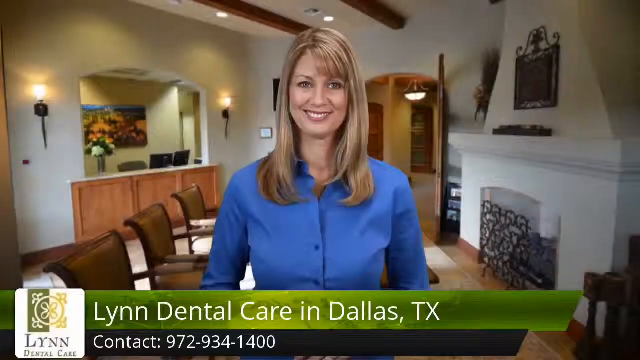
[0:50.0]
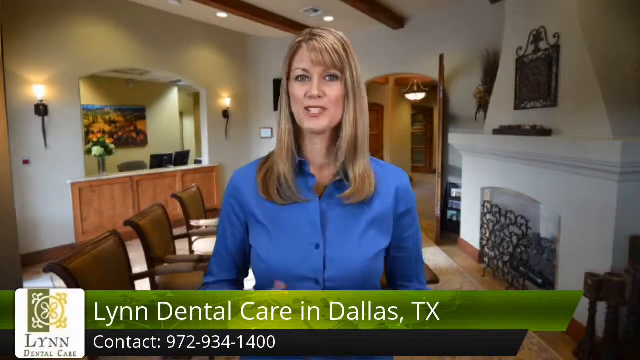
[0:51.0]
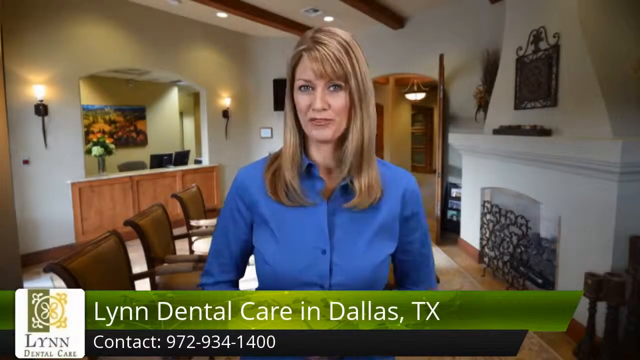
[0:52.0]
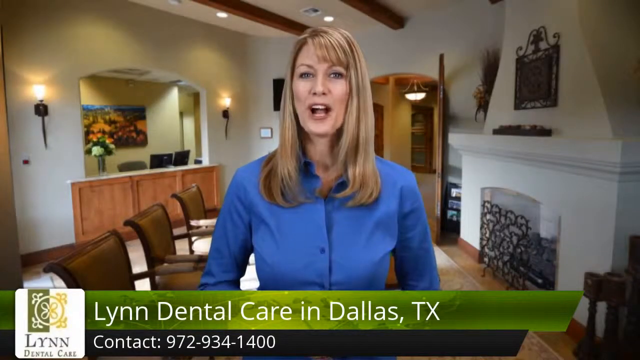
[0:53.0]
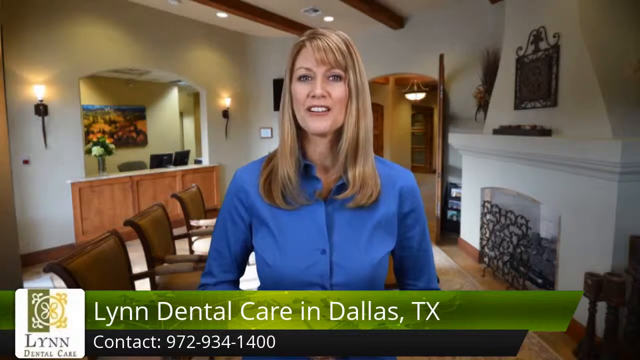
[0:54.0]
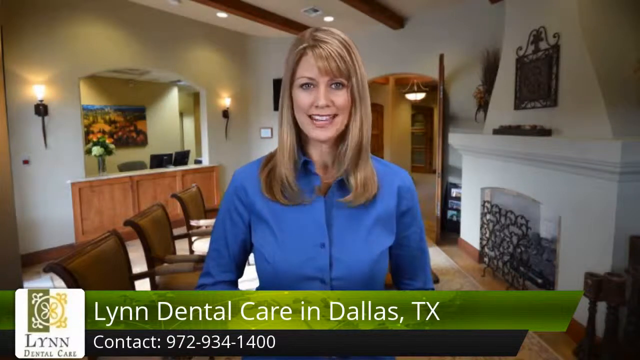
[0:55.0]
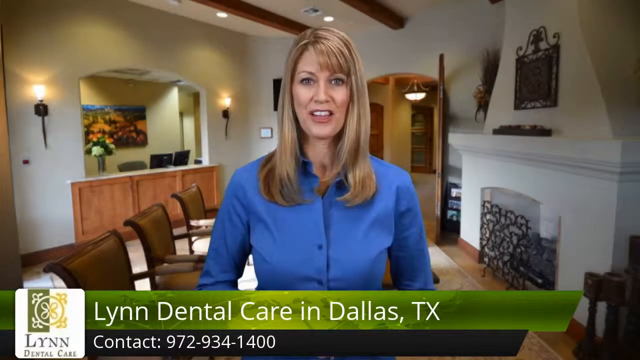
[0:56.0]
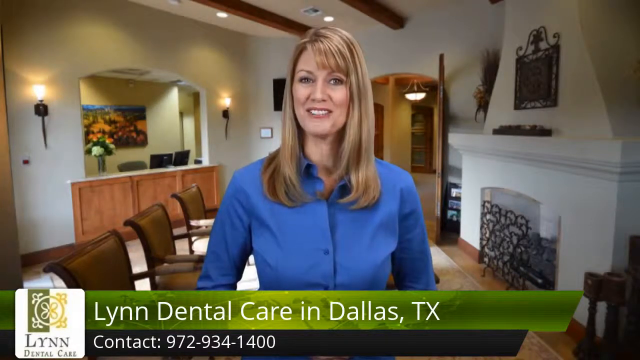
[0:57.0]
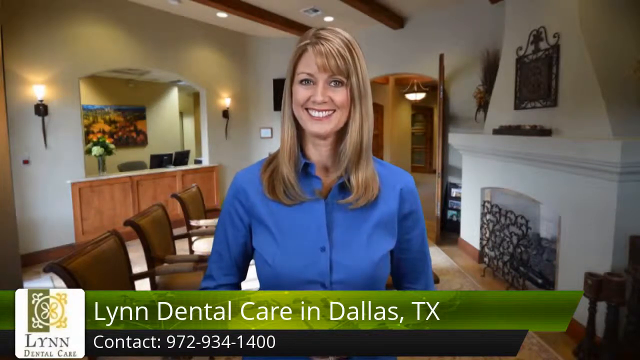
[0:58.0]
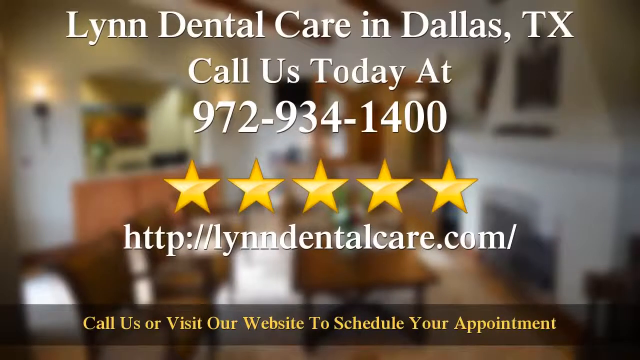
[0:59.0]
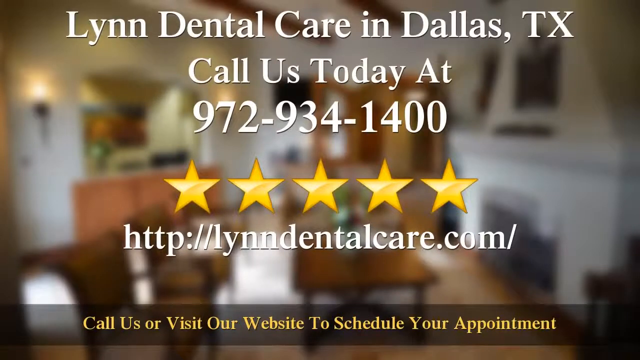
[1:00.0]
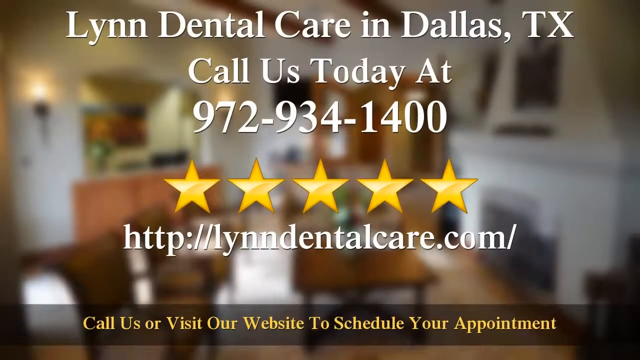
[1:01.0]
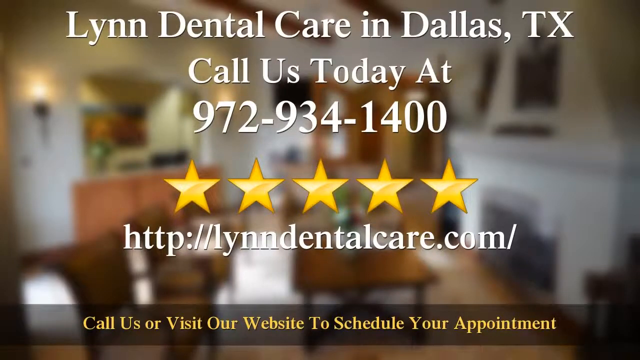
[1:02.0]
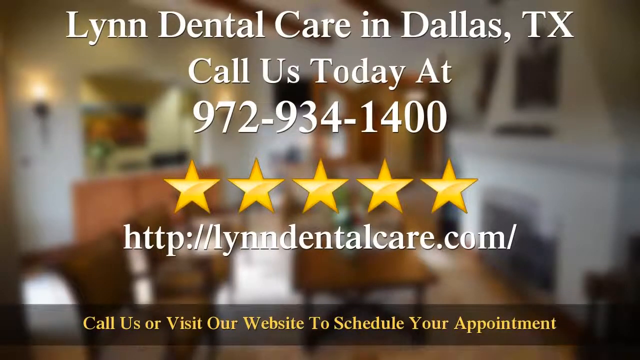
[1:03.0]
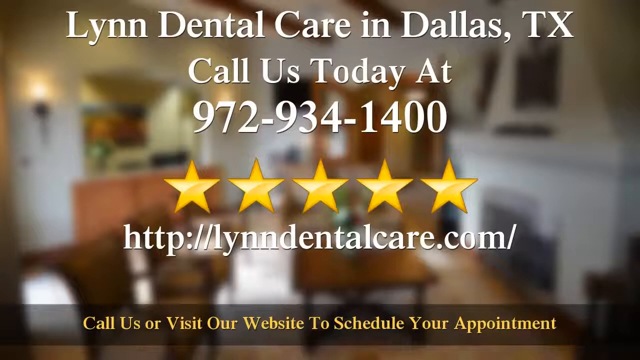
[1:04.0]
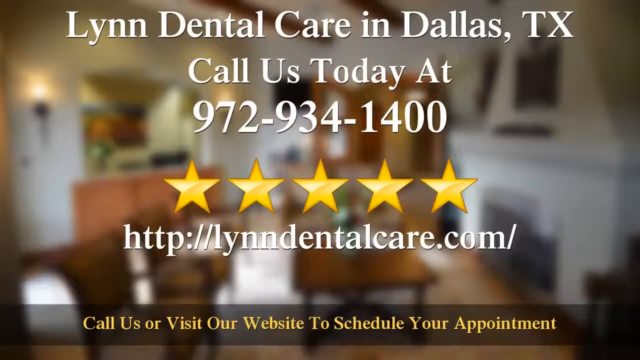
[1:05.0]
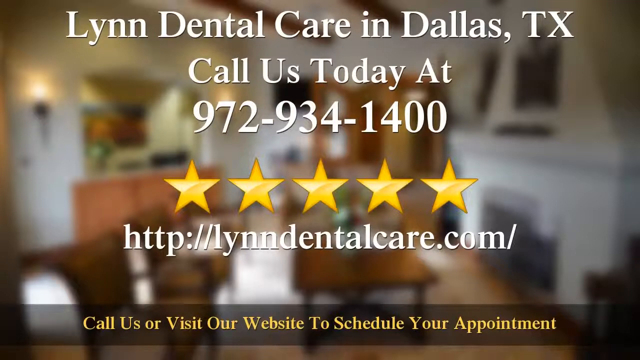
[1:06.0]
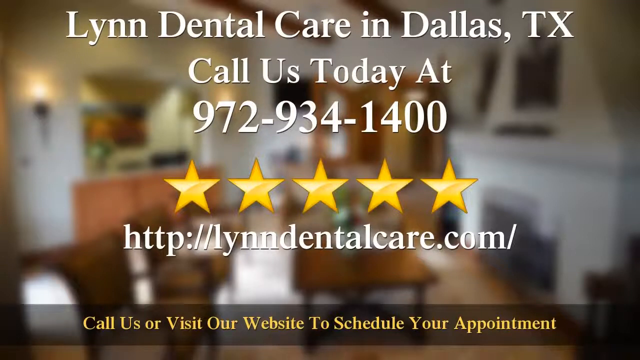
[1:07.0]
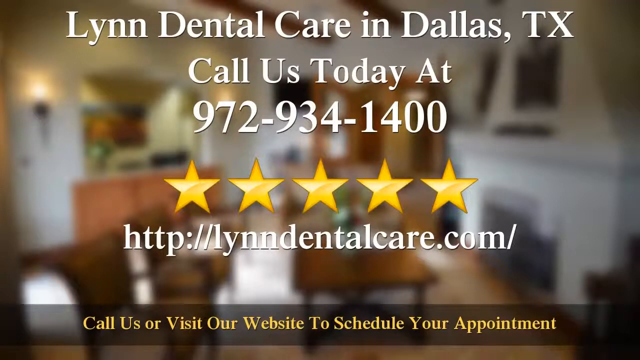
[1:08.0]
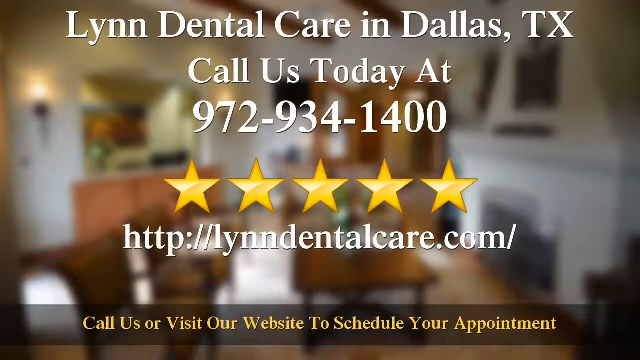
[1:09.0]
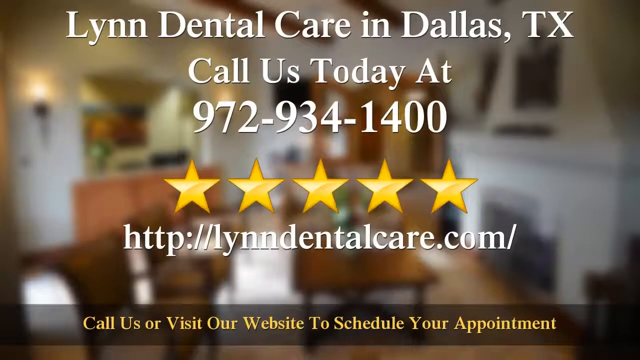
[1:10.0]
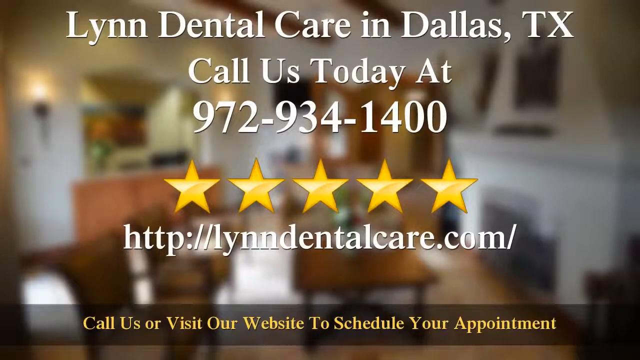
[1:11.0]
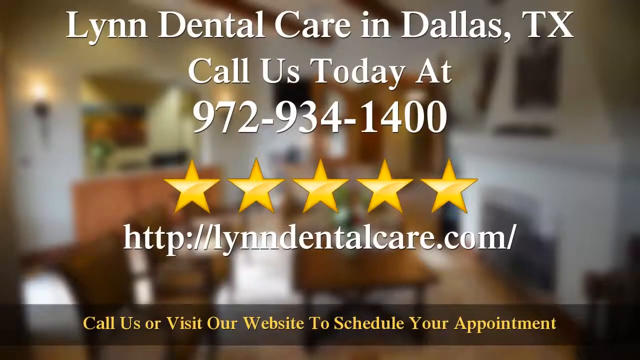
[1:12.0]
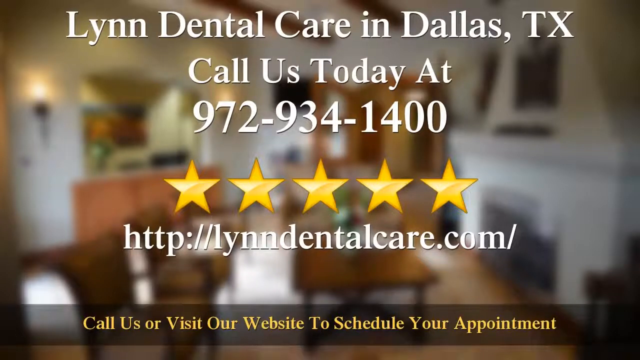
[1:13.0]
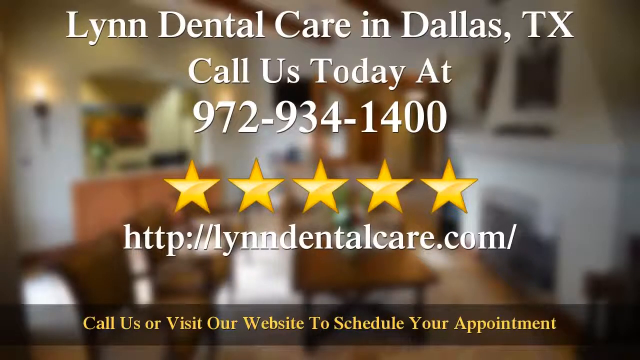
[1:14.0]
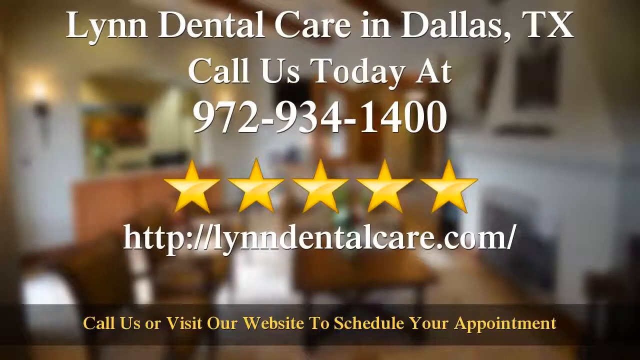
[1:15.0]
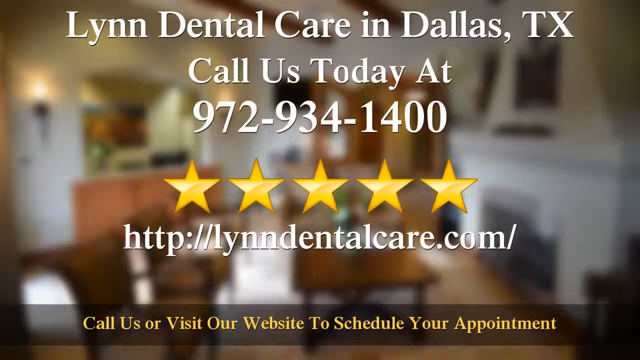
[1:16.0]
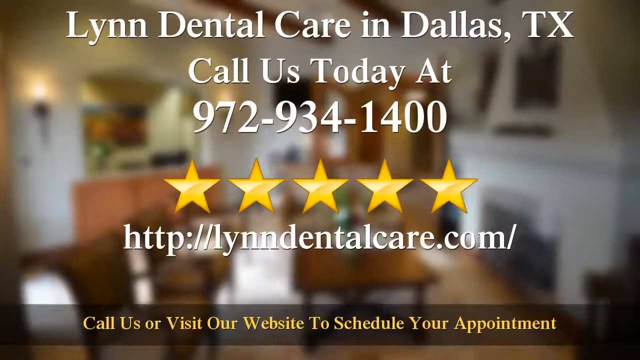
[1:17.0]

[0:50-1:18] A white and green color-blocked screen reads "Lynn Dental Care in Dallas, Texas", with "Dallas, Texas", five gold stars underneath and "Patient Review". The screen also shows the Lynn Dental Care logo and contact number. A white woman with shoulder-length blonde hair, bangs and blue eyes talks and smiles to the camera, with a banner in front of her reading "Lynn Dental Care in Dallas, Texas". She stands in what looks like a patient waiting room, with older-looking brown chairs and a fireplace with a wrought iron screen against it; behind her to the left is a check-in area for patients with computer screens set up. The video cuts to a man holding an iPad showing a five-star patient review of Dr. Brock Lynn. His thumbs move up and down and his fingers tap on the iPad as he seemingly reads the review. There are fries in the background and a neighborhood with a bit of street traffic. The video cuts back to the blonde woman speaking again. Then a new screen says "call us today" with the phone number, five gold stars and the website.